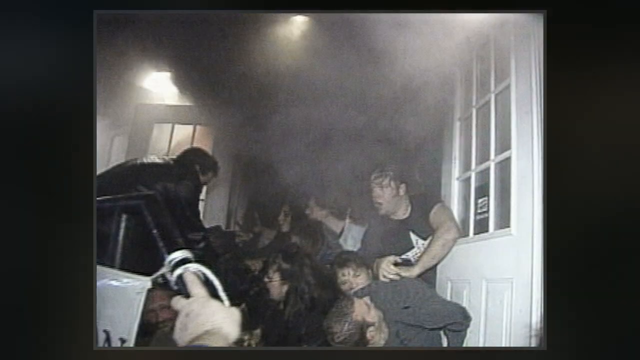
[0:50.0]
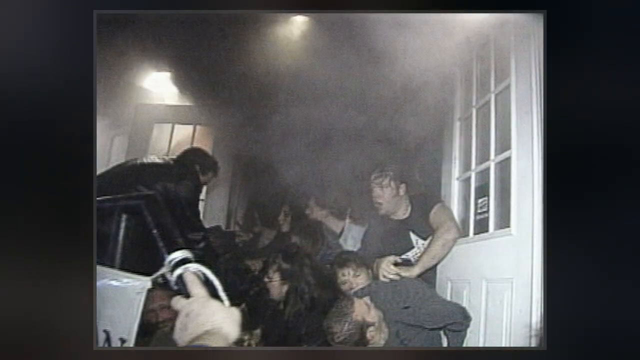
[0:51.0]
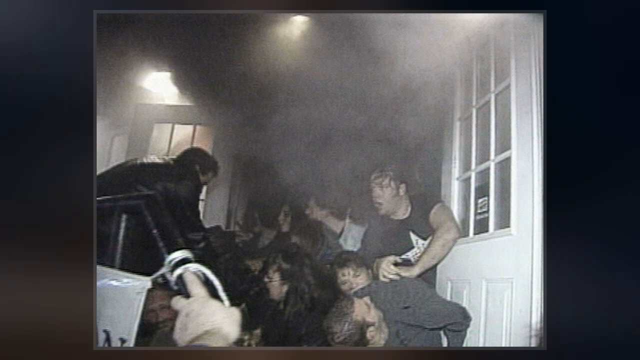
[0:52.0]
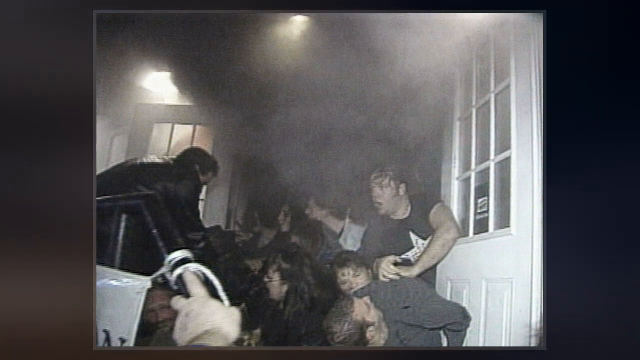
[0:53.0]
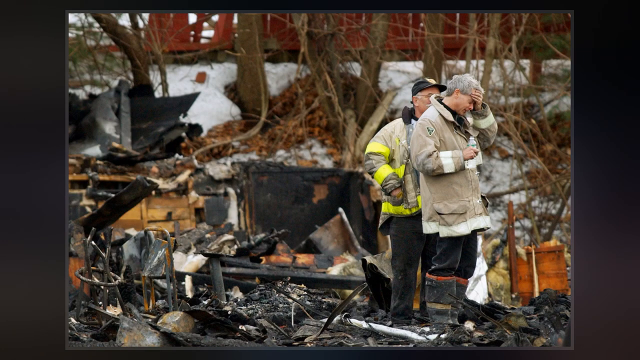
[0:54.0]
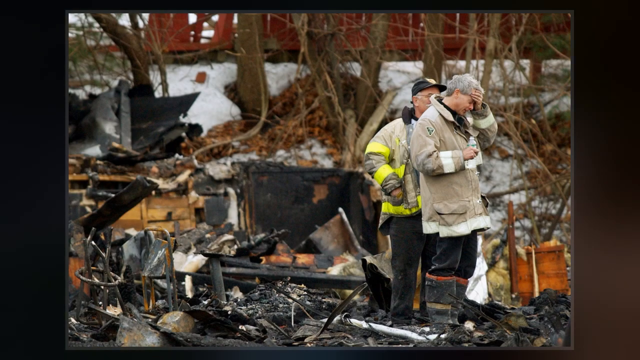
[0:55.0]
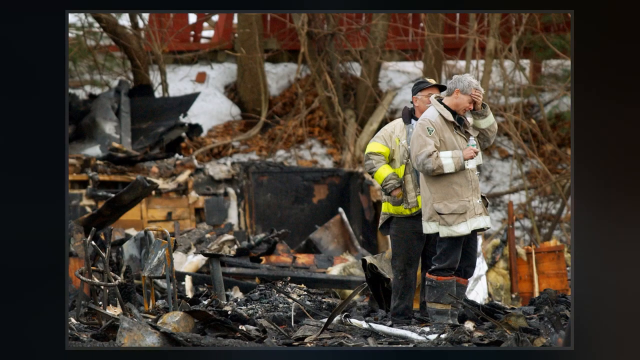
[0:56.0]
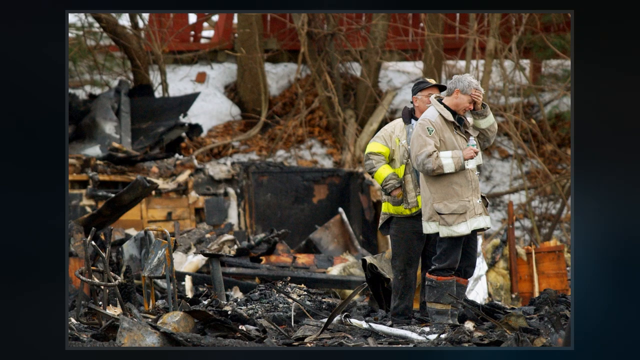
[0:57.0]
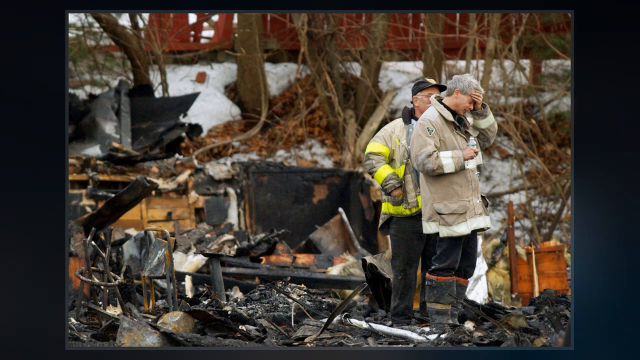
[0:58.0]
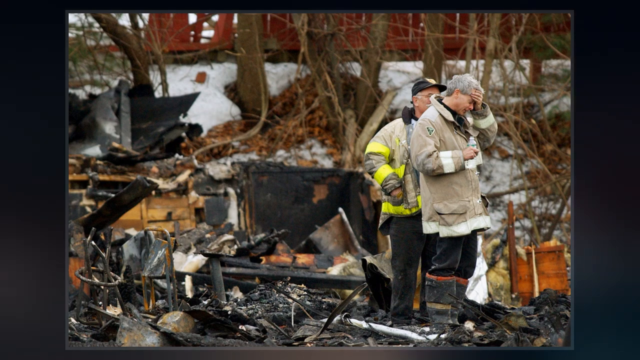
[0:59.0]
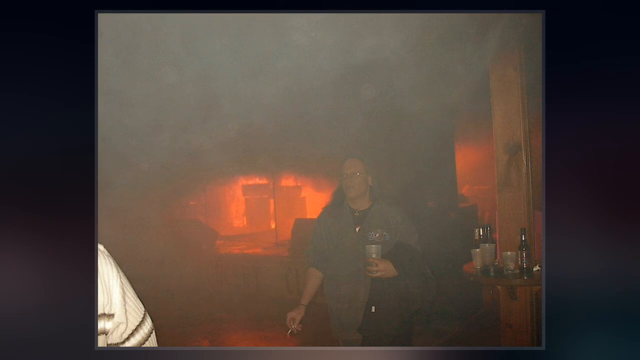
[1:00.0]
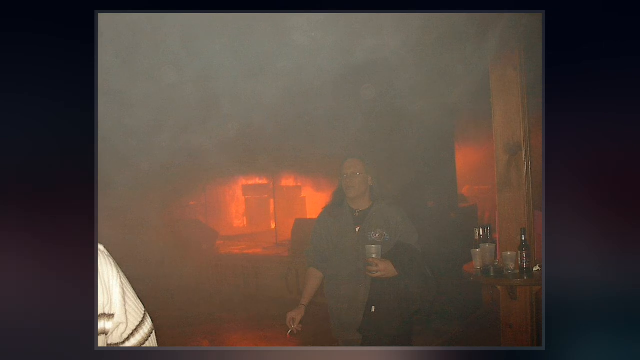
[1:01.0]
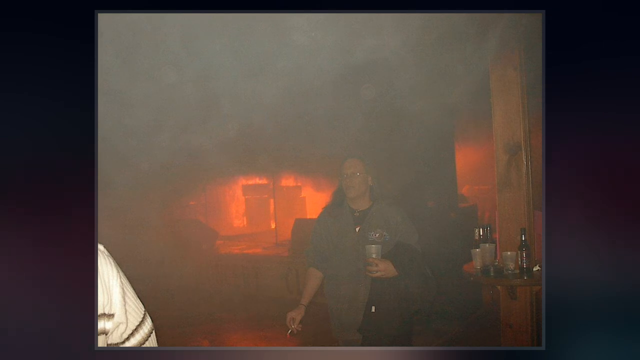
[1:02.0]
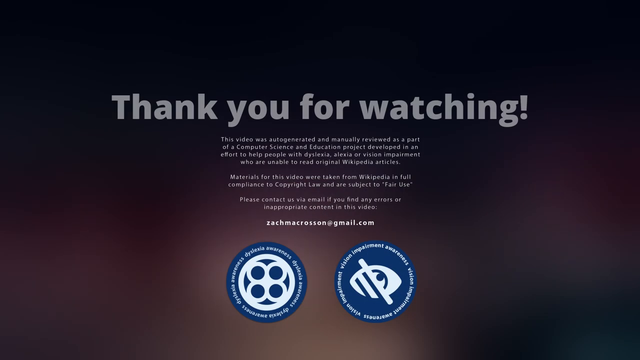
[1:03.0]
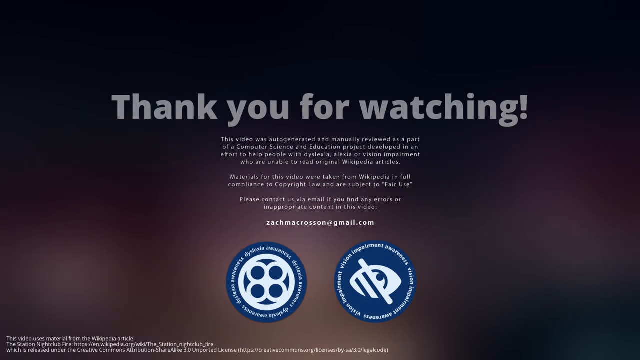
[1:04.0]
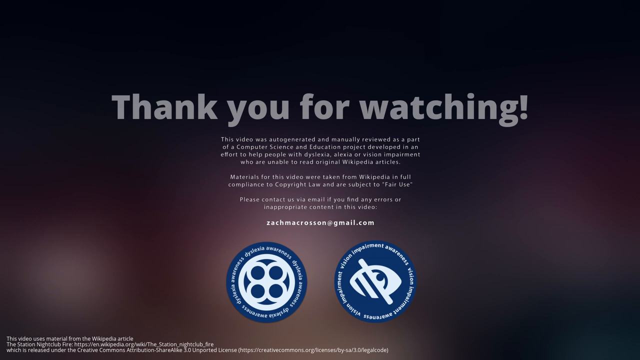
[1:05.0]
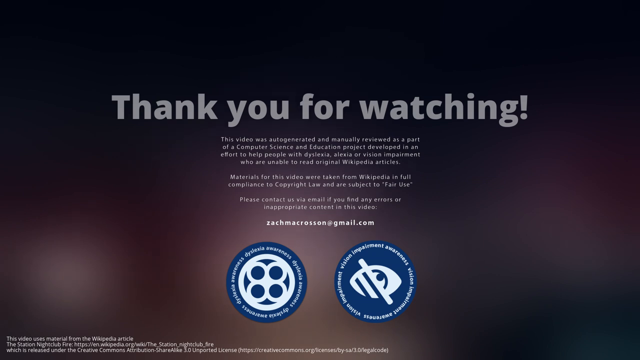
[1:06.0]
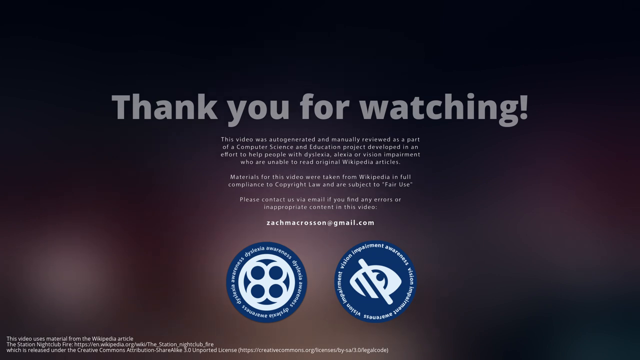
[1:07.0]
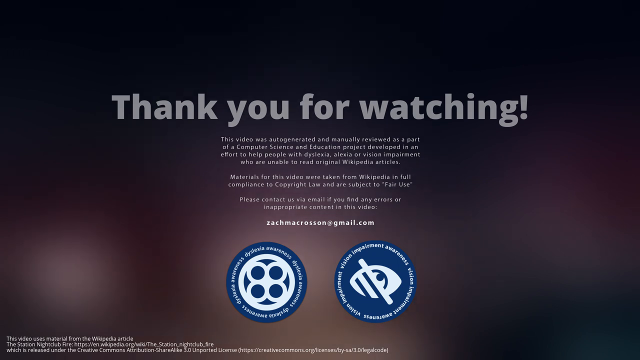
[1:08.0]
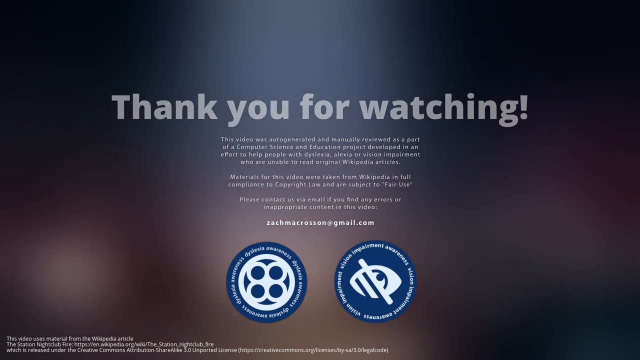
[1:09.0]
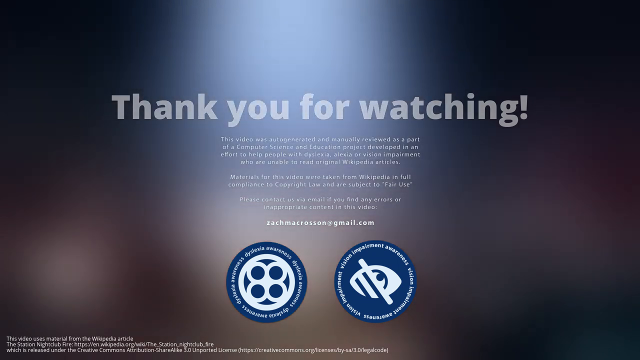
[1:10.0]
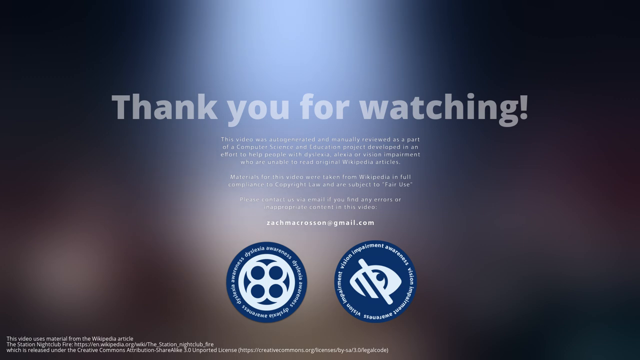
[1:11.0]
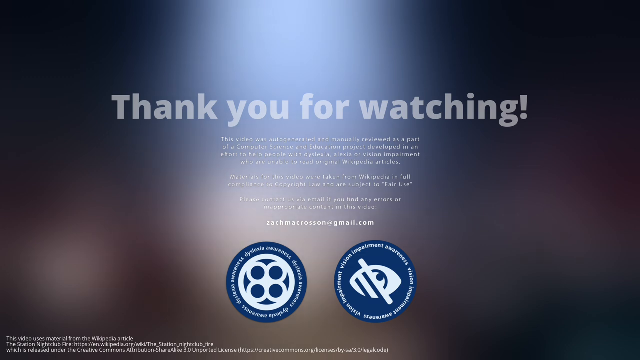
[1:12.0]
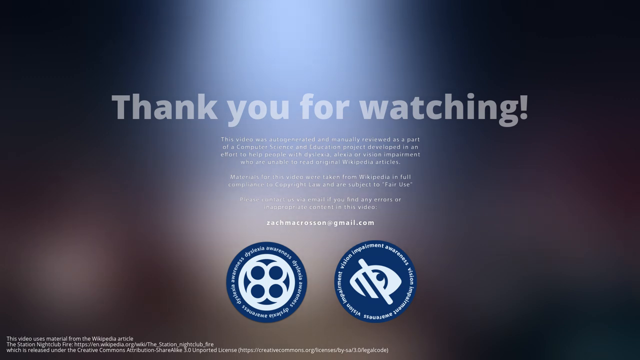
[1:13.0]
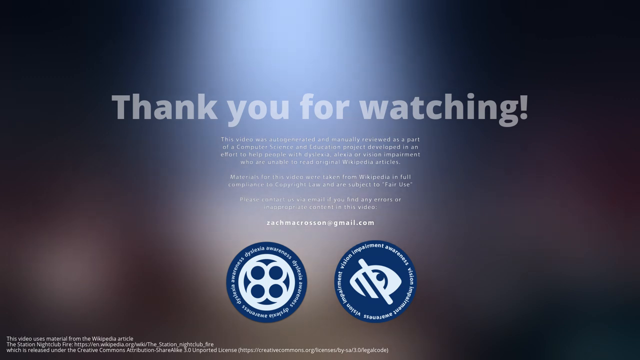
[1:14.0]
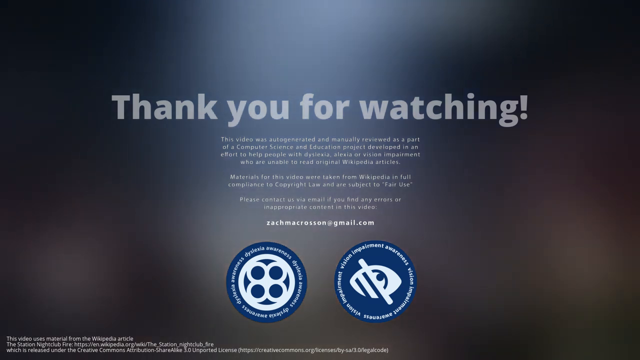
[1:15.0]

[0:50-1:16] A still image shows a scene that is hard to make out. There are some people, maybe about 10 to 15, and it looks quite smoky; they look as if they are hanging out of a door or possibly a window. Someone is standing up on the left who might be pulling people out. No one is looking at the camera; it is not a posed picture and looks like it captures an event as it is happening. The video then cuts to two men in uniform, perhaps firefighters' uniforms, standing on top of the charred remains of a building outside, wearing thick coats. They look to be two older men. Next comes a still image of a man who looks like he is in a bar. He wears glasses and has a drink in his hand, and there are some drinks on a table to his left. The picture is somewhat hazy, with some bright lights in the background. Finally, a plain background appears with text at the top of the screen reading "thank you for watching," a paragraph of writing underneath that is difficult to read, and two blue icons.